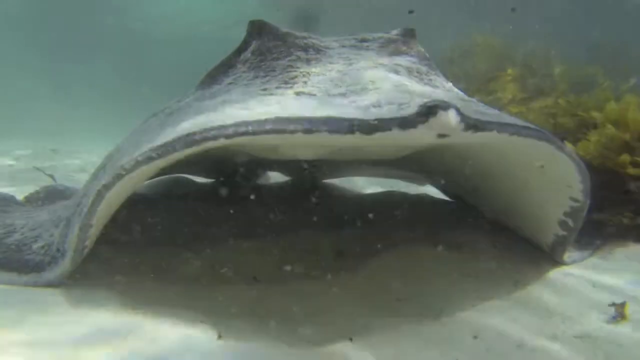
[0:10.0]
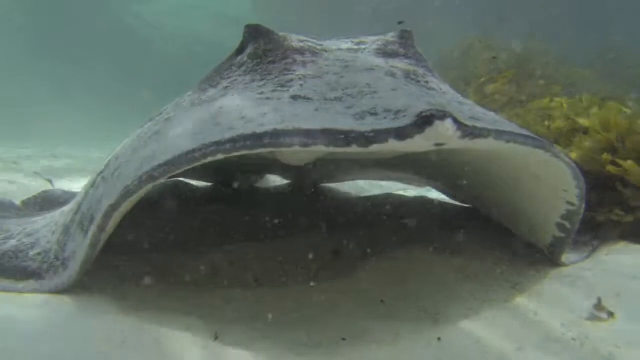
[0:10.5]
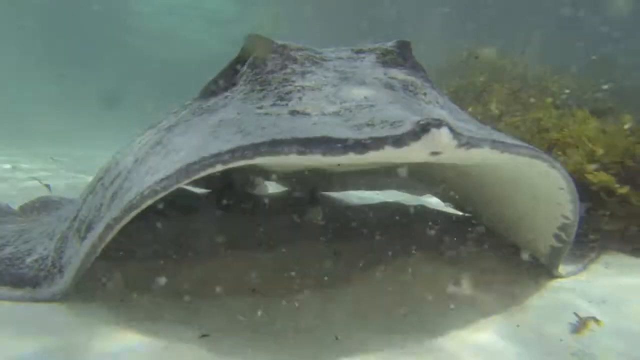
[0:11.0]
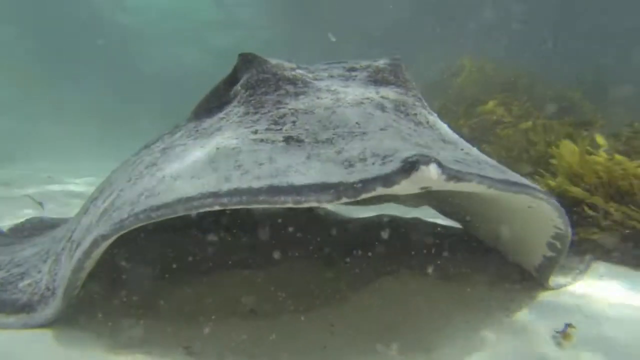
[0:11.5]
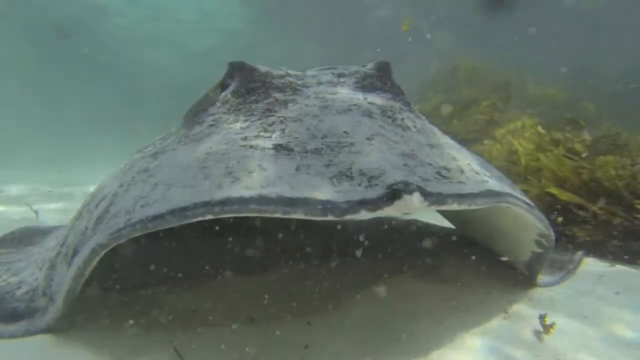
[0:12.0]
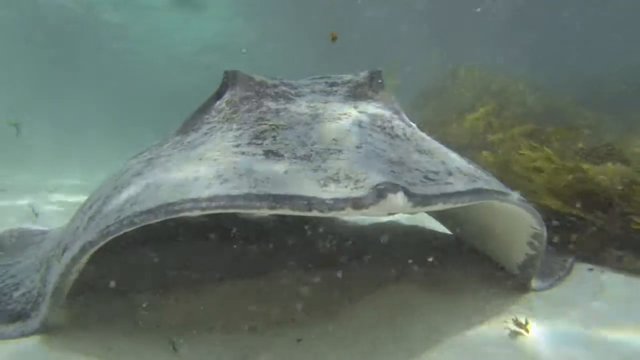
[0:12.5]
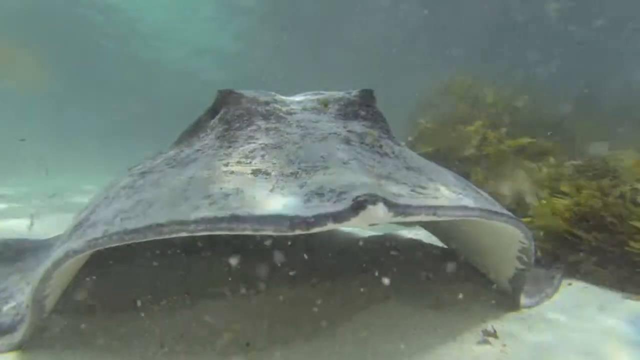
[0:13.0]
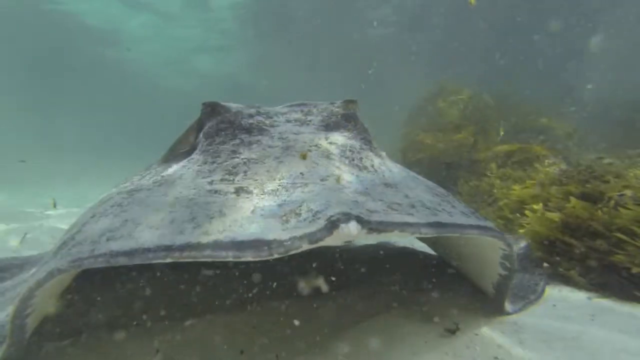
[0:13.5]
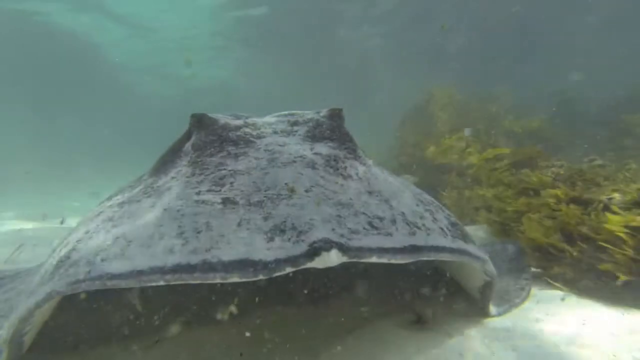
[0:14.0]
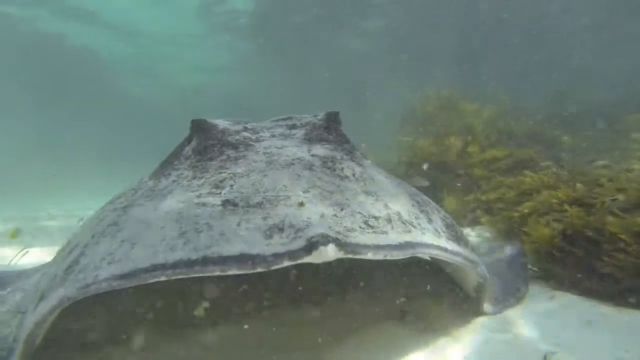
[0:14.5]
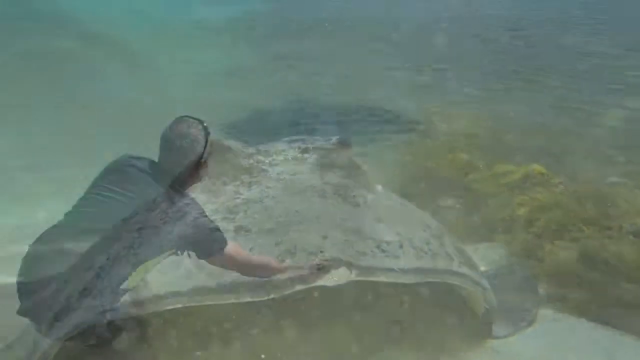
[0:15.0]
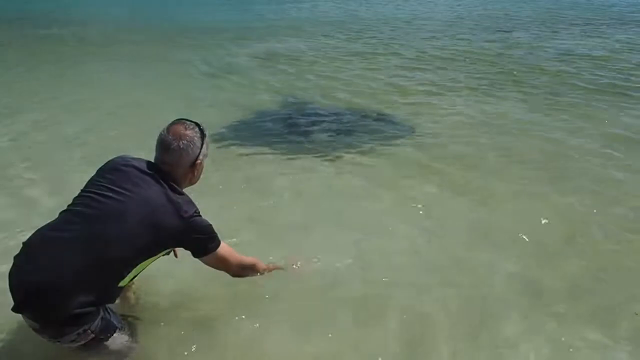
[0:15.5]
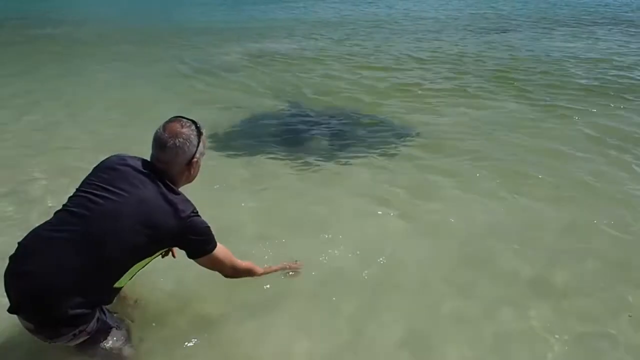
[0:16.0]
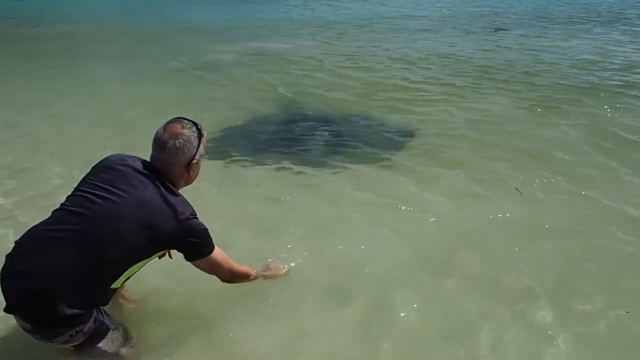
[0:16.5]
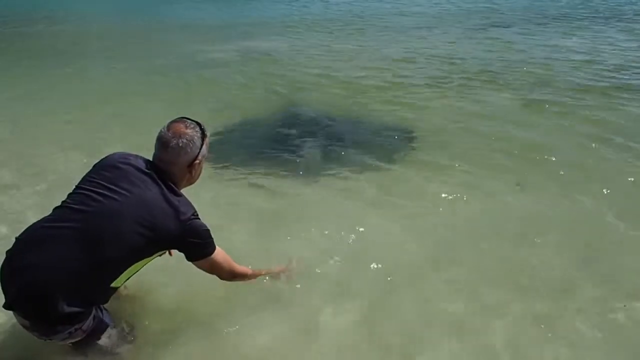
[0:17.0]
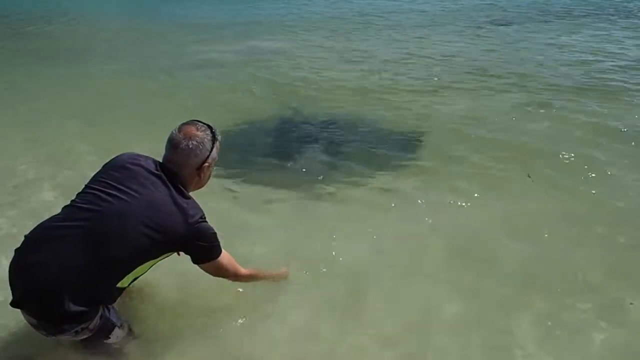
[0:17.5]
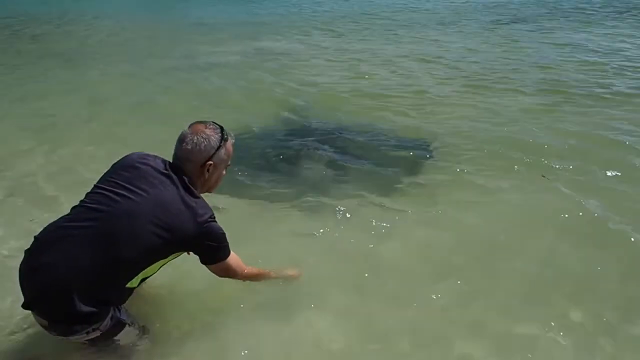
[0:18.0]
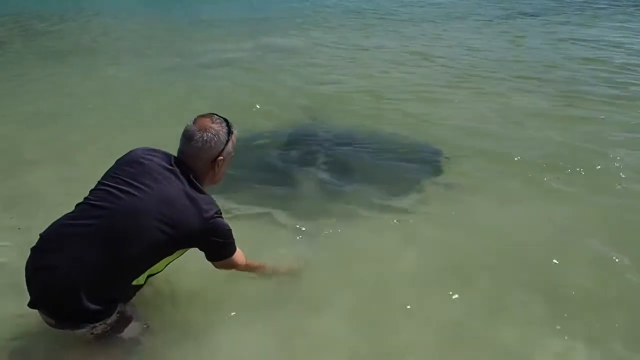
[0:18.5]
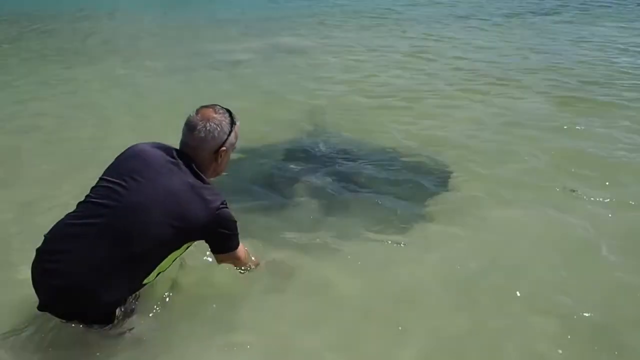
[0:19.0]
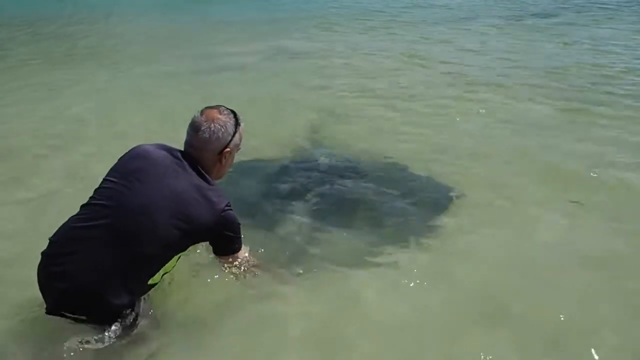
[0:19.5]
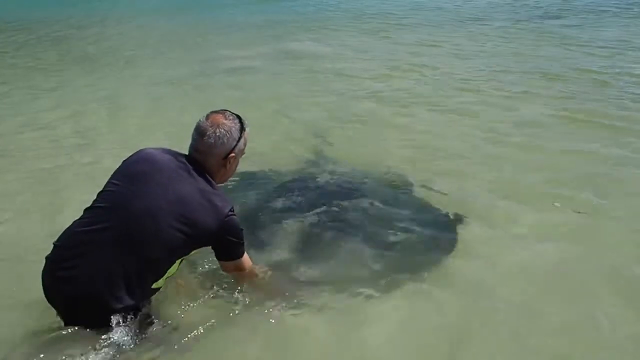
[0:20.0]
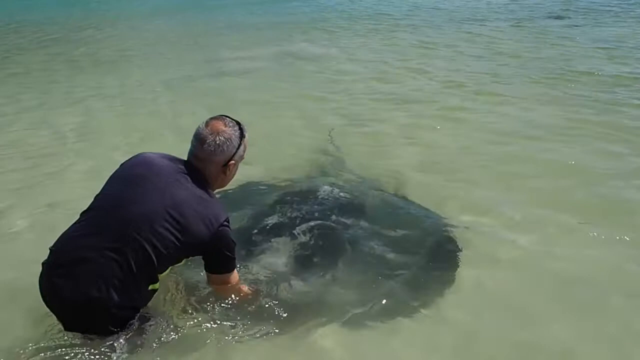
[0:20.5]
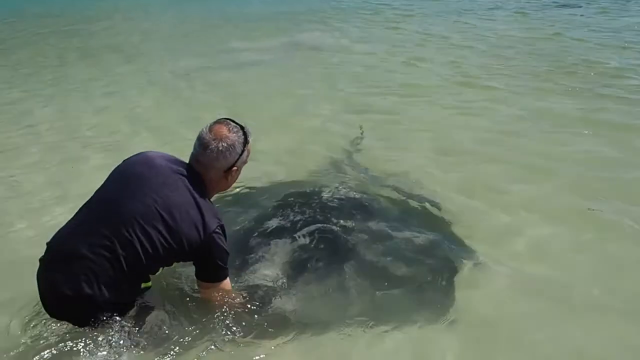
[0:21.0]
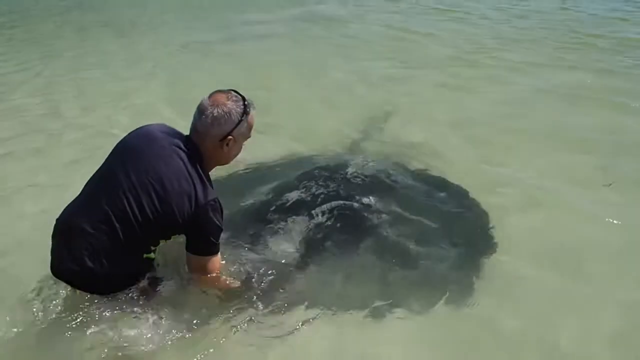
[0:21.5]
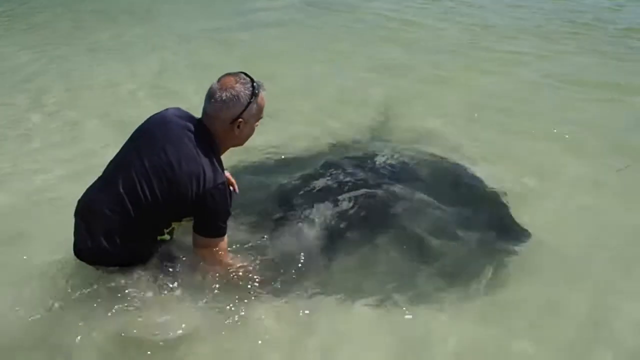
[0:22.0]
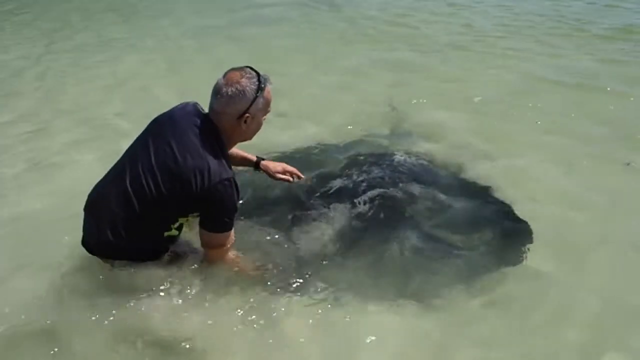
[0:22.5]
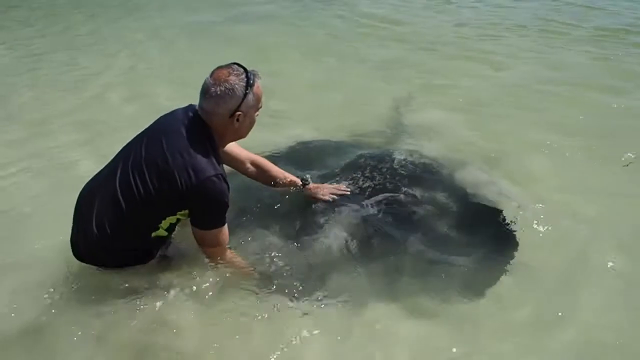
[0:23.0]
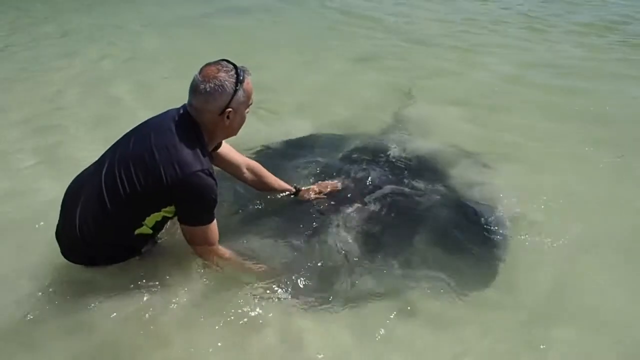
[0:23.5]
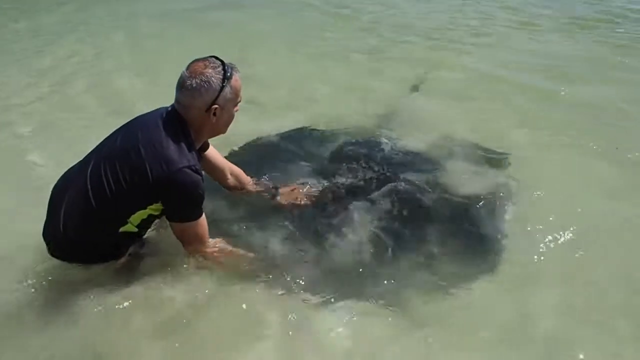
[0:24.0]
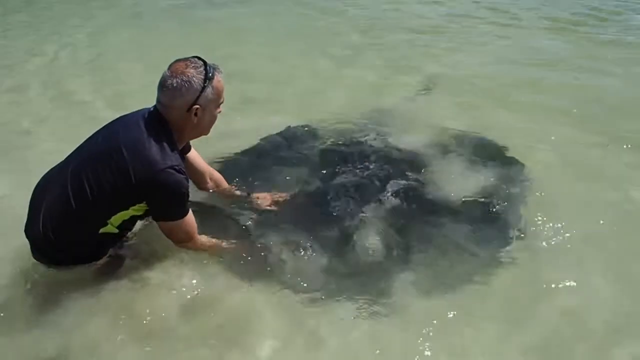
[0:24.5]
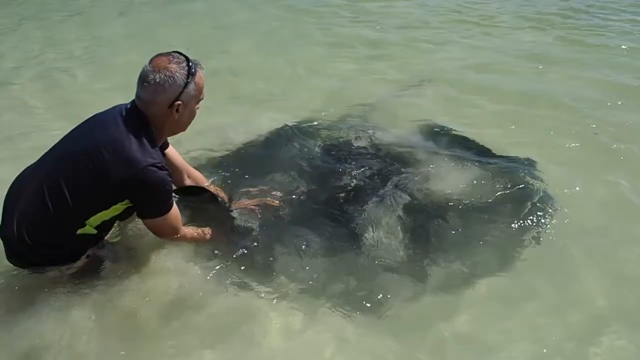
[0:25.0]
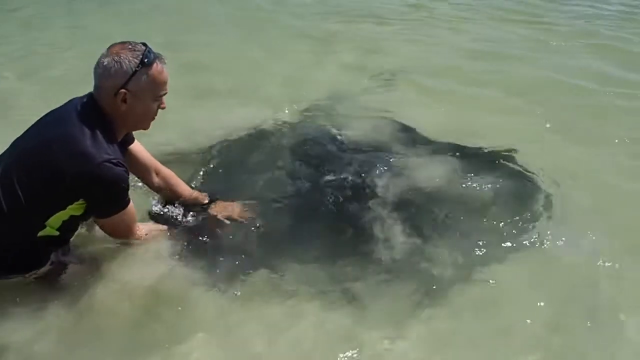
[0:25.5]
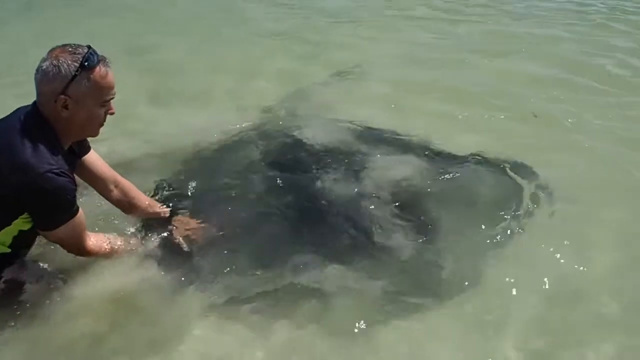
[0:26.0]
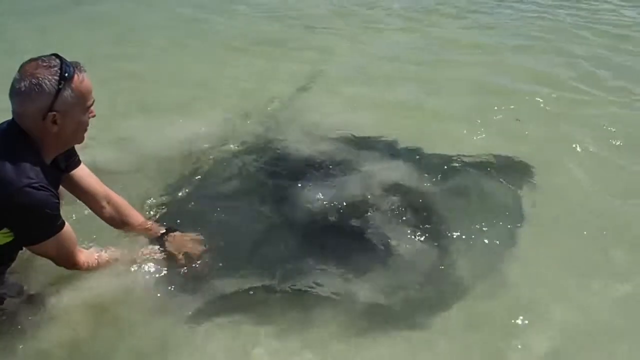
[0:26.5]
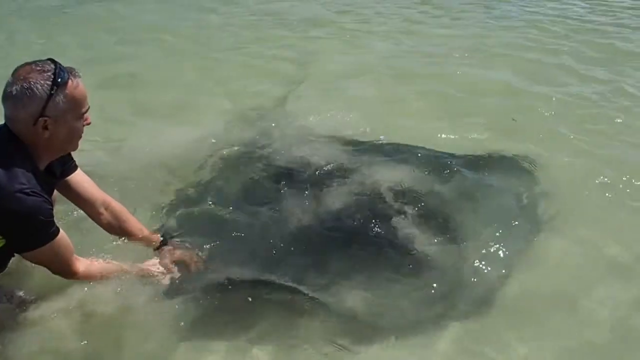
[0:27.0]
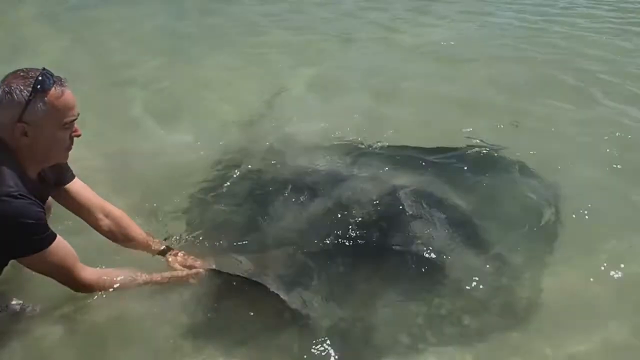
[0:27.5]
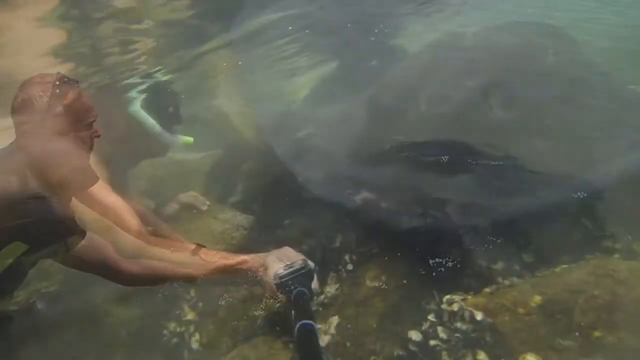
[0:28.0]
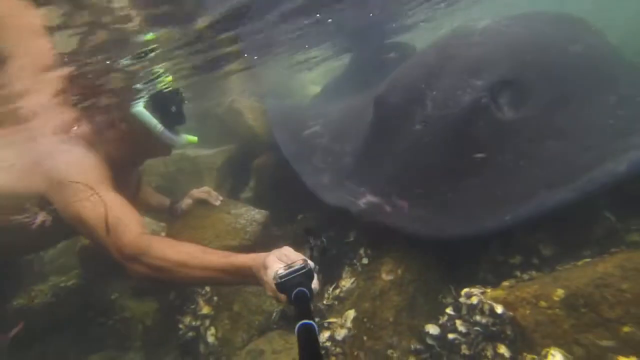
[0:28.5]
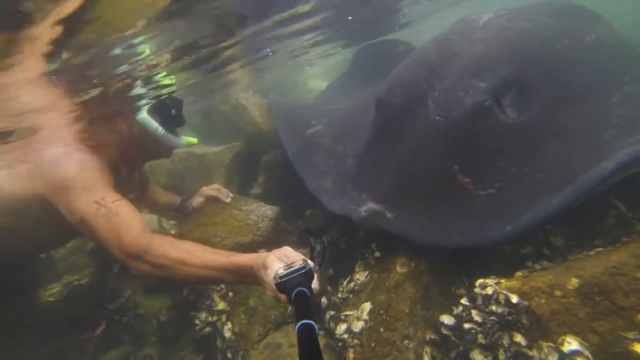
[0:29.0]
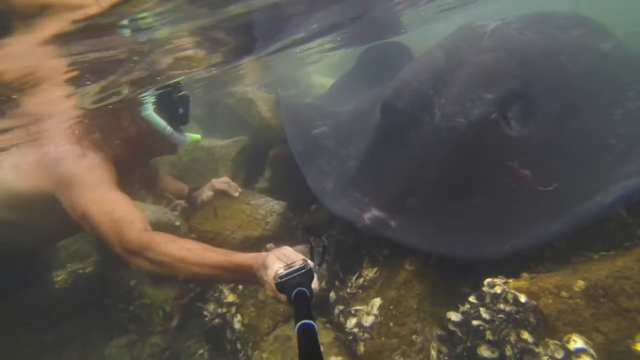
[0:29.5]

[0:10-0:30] The stingray's body sort of rocks back and forth a little, and its wings move up and down. The view then sort of zooms out to reveal a person standing near the stingray, seen from above the water looking down; from this angle the stingray looks a lot flatter. The man is on the left side of it, near its bottom left. He is an older man, slightly balding on top of his head, with black sunglasses resting on top of his head rather than down. His right hand is in the water, and his left hand might be in the water as well. The man sort of splashes the water near him, driving the stingray toward him. The stingray rests against his body, picking up food that he probably holds in his right hand, and the man pats the back of the stingray, which slightly sticks out as it eats from his hand. He sort of strokes its back one more time before the stingray starts turning to the right and moving away. Then an underwater view shows another man sort of facing this stingray or maybe a different one.